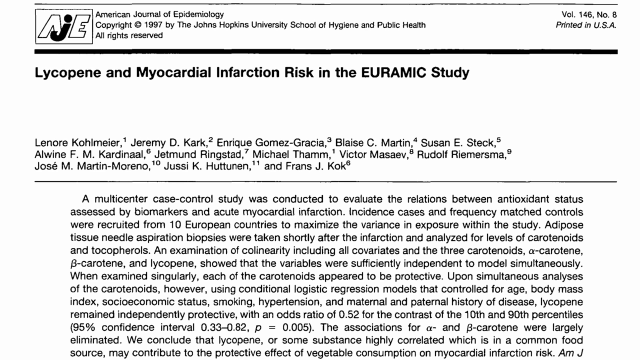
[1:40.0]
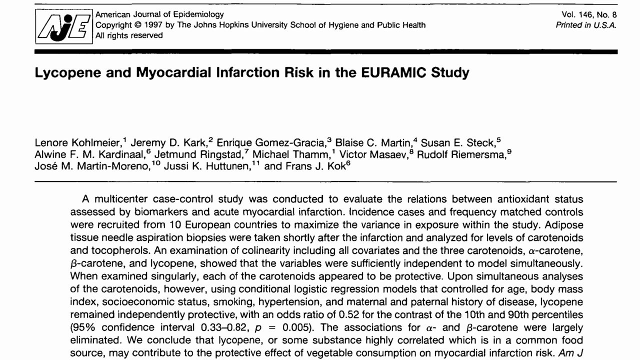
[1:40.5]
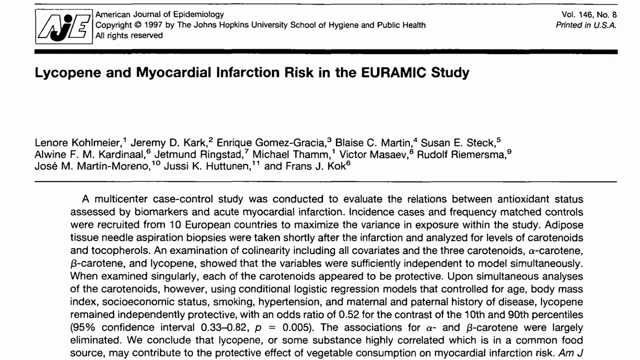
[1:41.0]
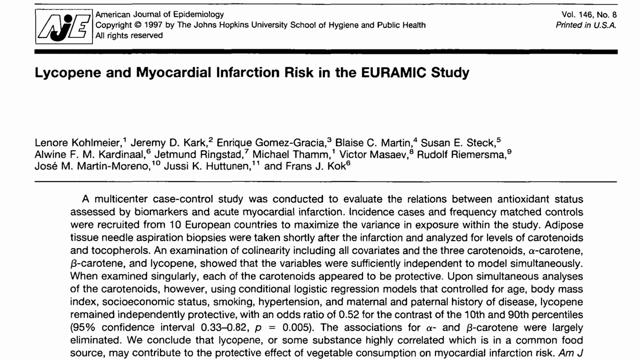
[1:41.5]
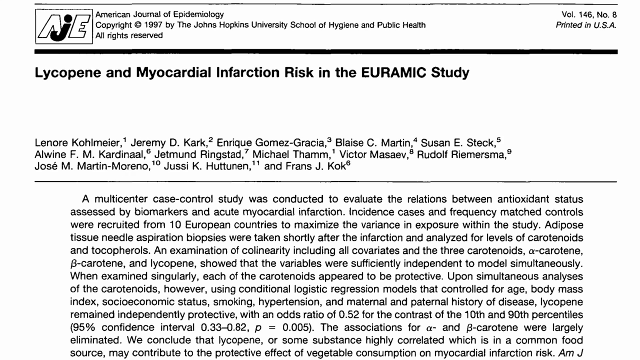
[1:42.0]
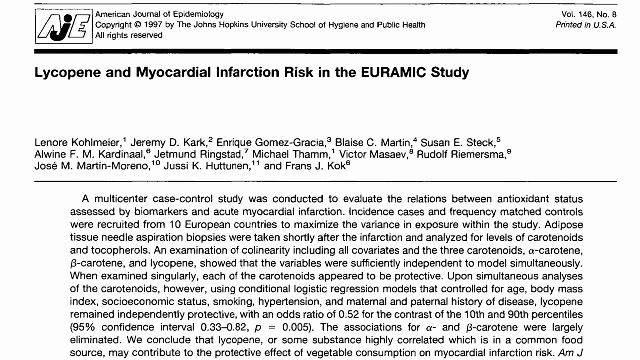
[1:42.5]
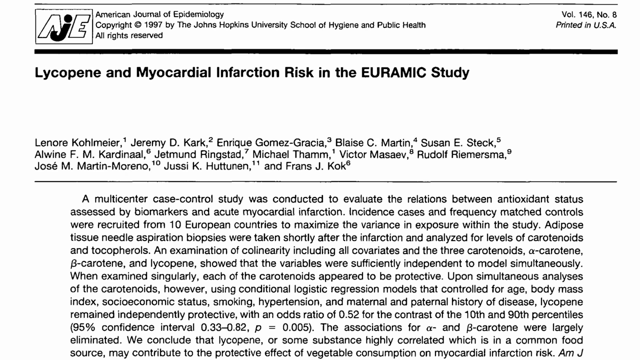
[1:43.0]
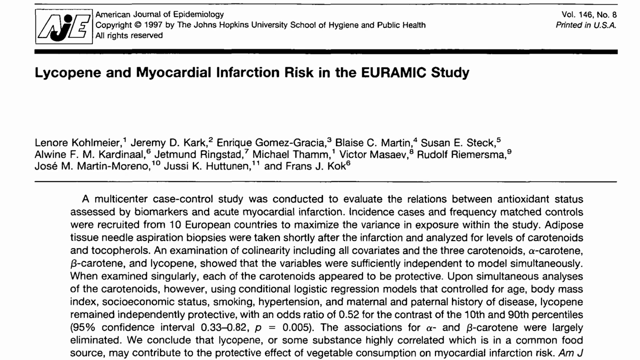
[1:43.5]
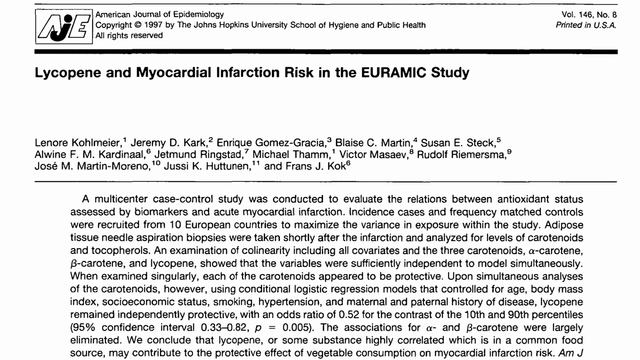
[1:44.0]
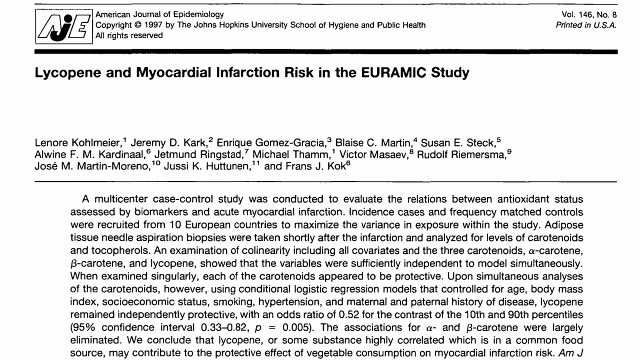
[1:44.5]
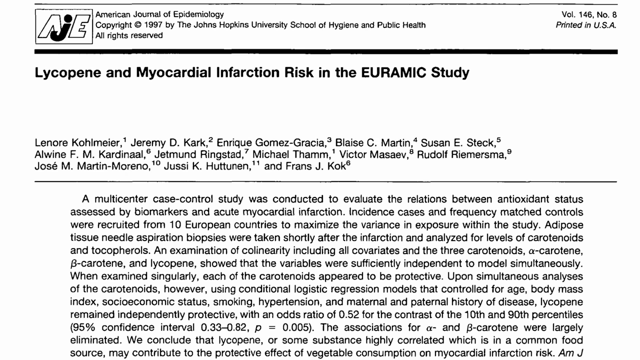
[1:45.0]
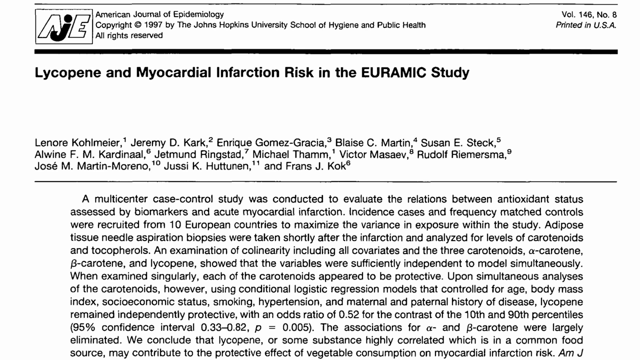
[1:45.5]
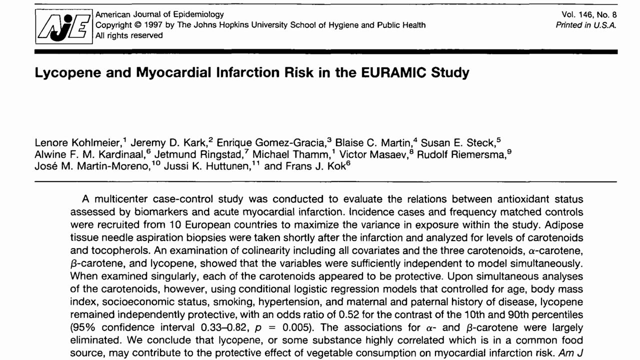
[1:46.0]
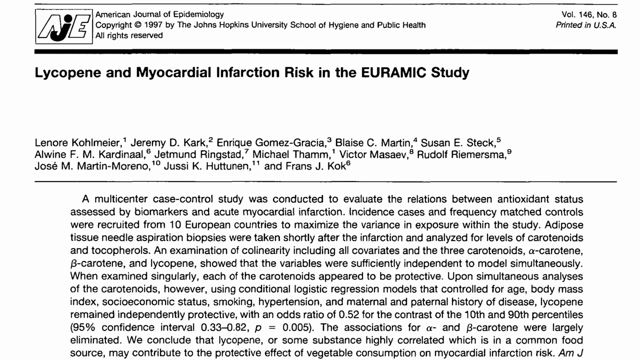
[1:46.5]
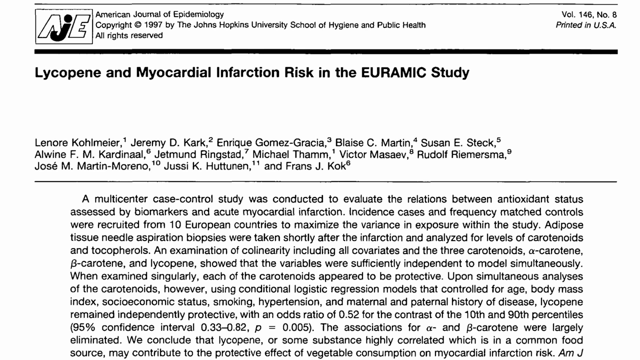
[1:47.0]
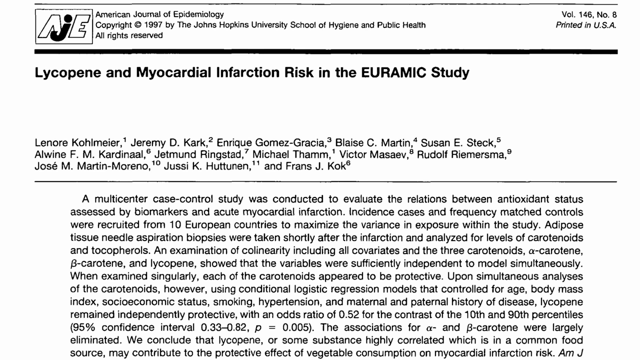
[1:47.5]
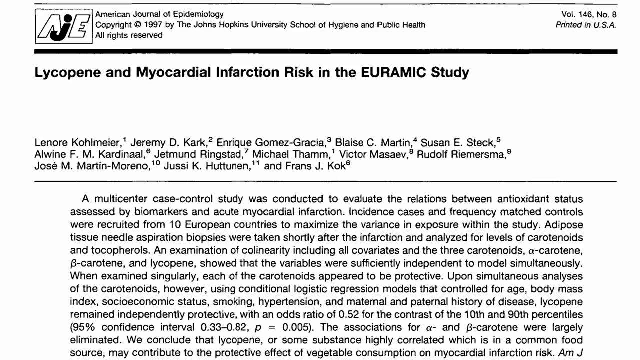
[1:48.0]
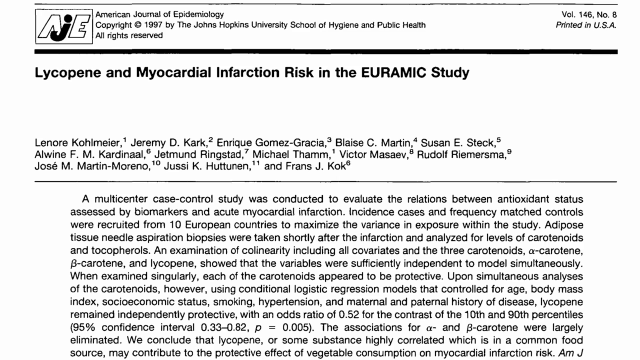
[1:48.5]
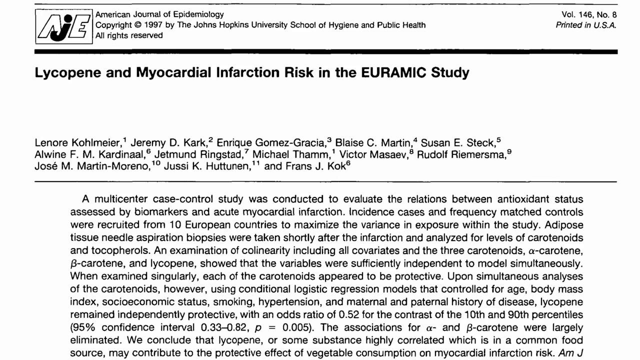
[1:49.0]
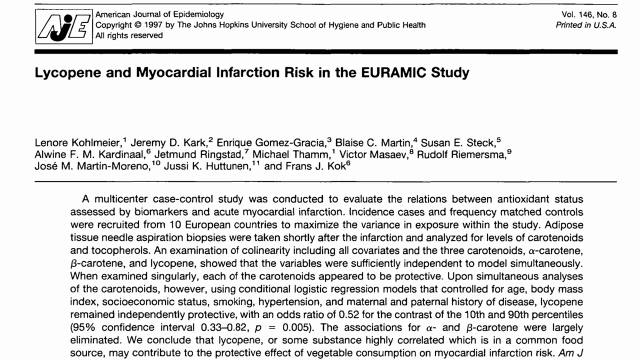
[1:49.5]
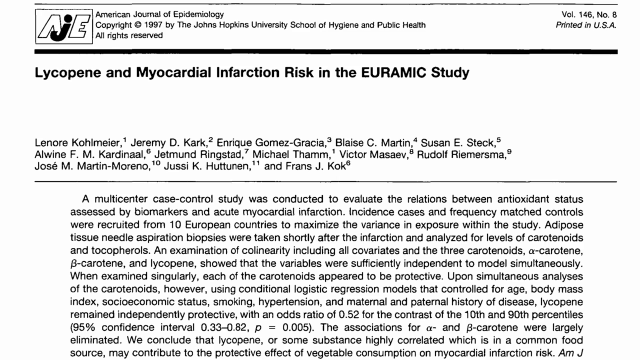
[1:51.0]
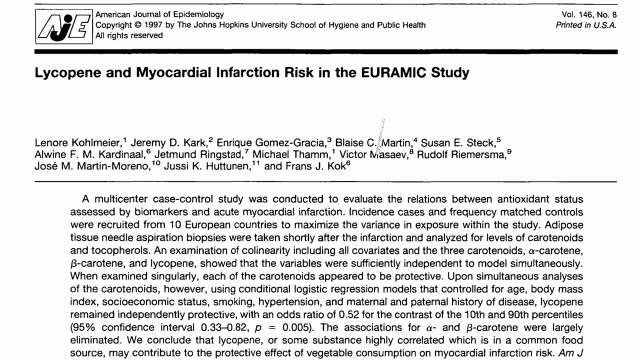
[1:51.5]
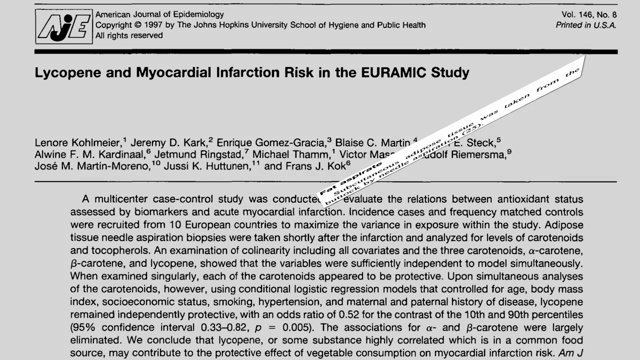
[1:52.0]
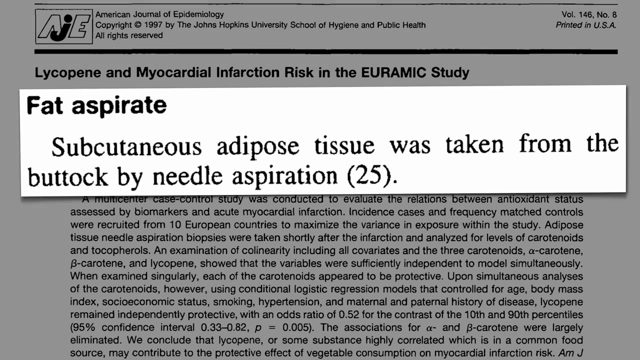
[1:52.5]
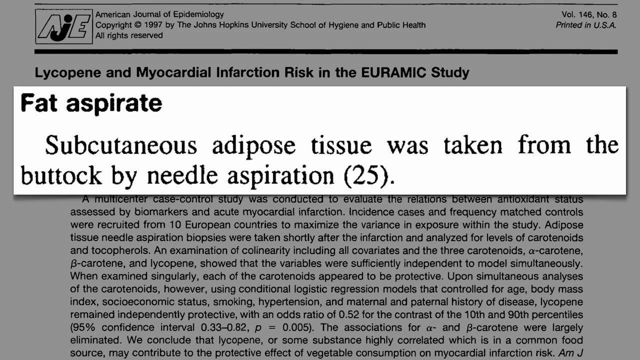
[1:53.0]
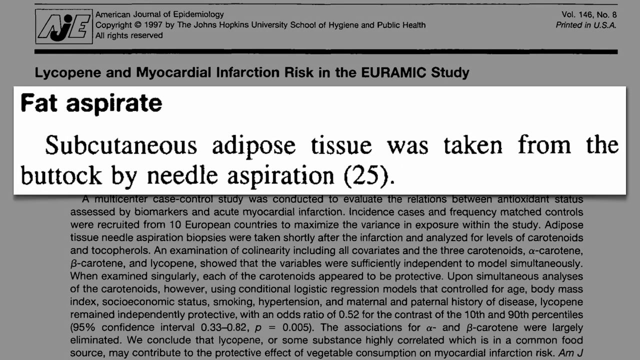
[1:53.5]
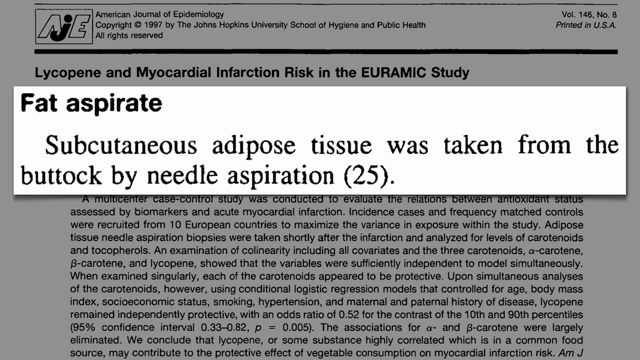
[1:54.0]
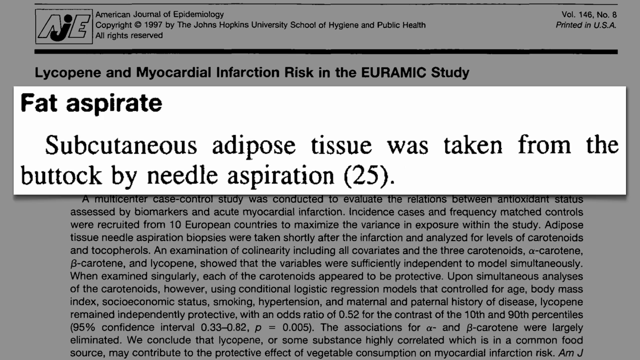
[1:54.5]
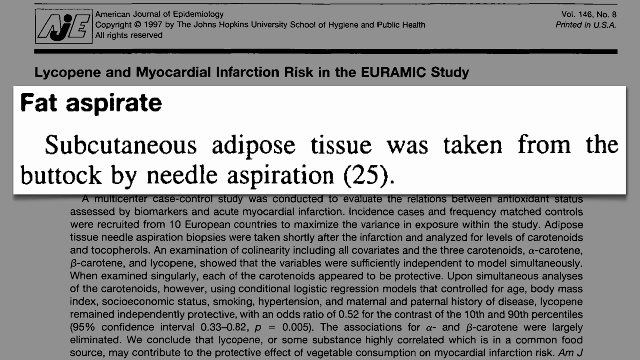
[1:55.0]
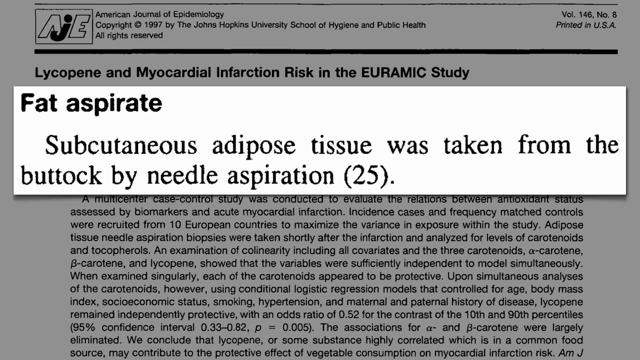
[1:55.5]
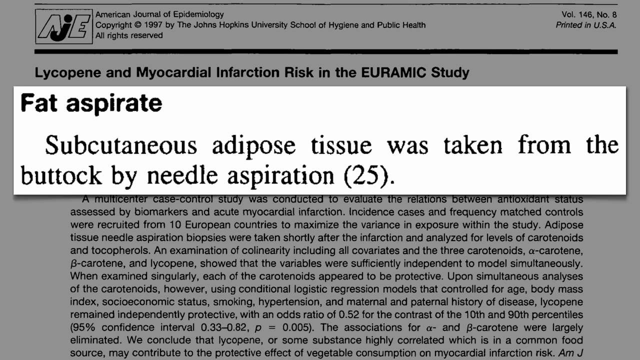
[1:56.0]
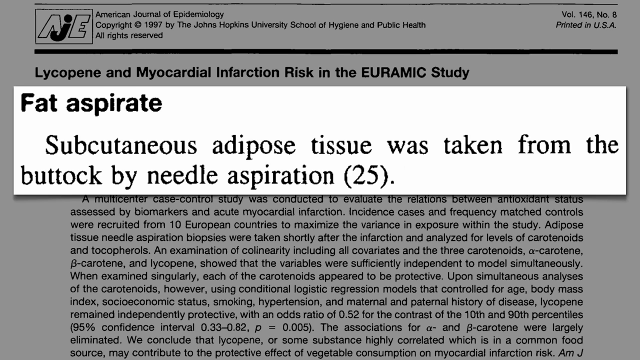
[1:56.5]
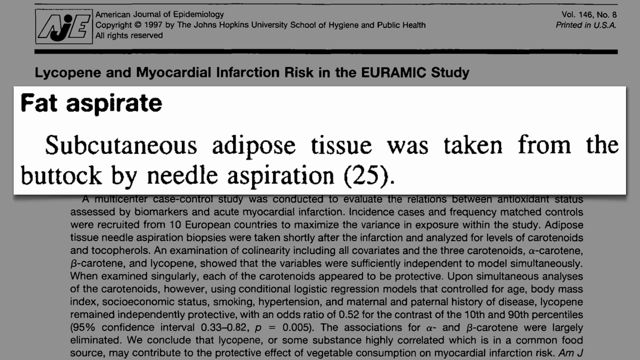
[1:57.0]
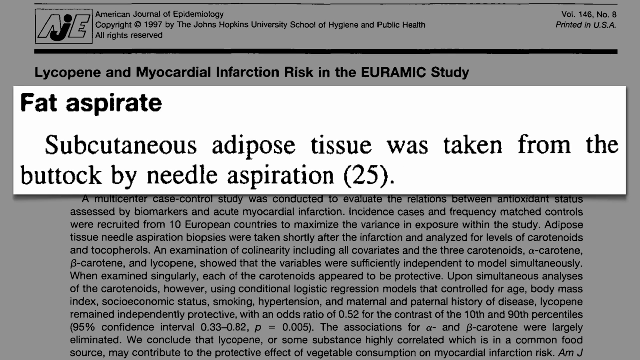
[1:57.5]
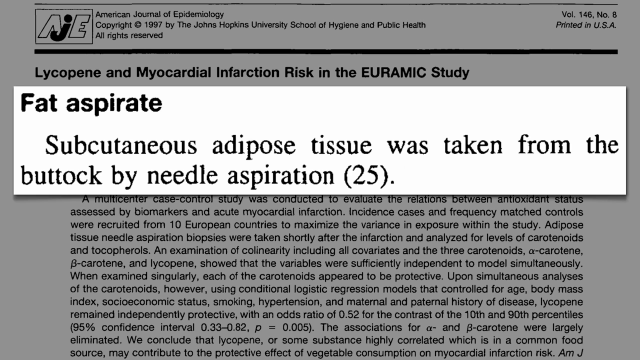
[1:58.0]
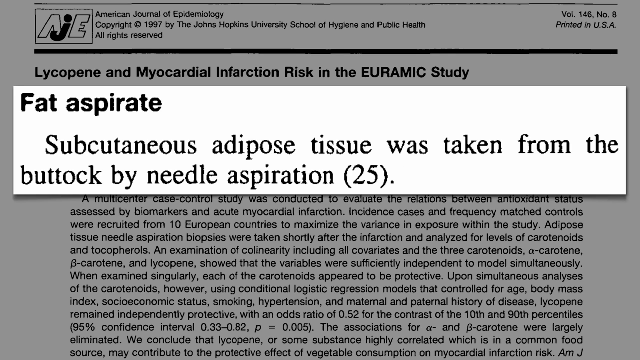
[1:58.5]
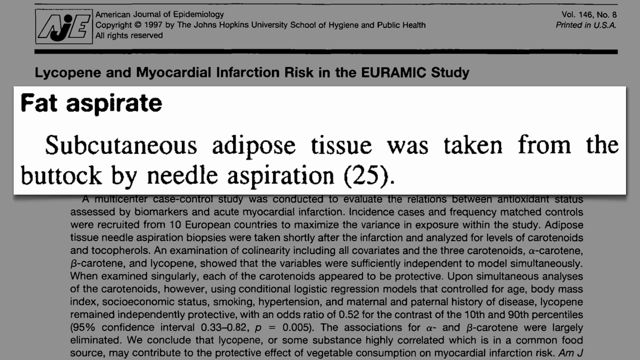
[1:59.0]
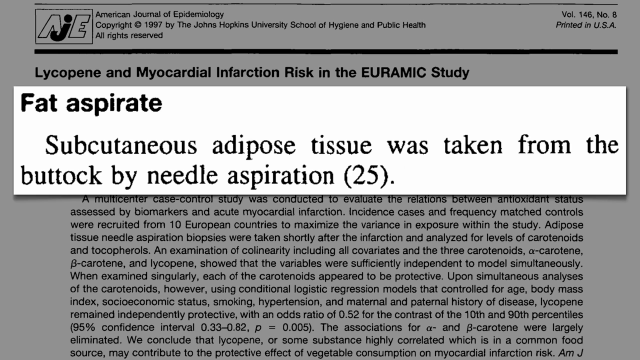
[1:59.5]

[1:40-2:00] The next study is from the American Journal of Epidemiology, 1997, Johns Hopkins University School of Hygiene and Public Health, titled "lycopene and myocardial infarction risk in the uramic study," with a long list of authors. The text says "a multi-case control study was conducted to evaluate the relations between antioxidant status assessed by biomarkers and acute myocardial infarction. Incidence cases and frequency-matched controls were recruited from 10 European countries to maximize the variance in exposure within the study. Adipose tissue needle aspiration biopsies were taken shortly after the infarction and analyzed for levels of carotenoids and tocopherols." It continues with a passage about alpha carotene, beta carotene and lycopene, and "when examined singularly, each of the carotenoids appeared to be protective."